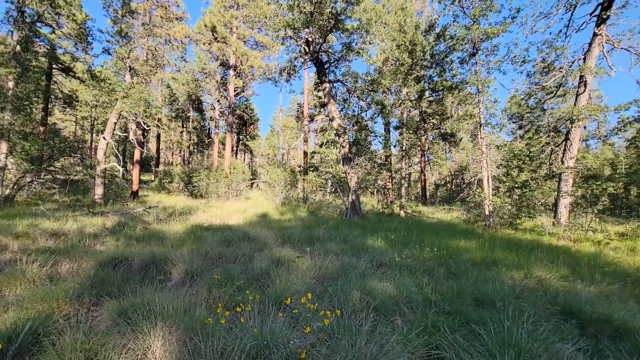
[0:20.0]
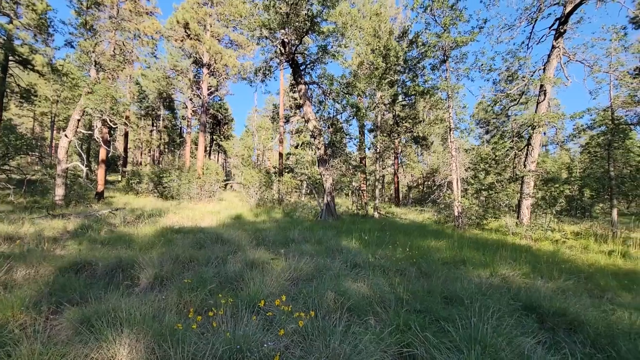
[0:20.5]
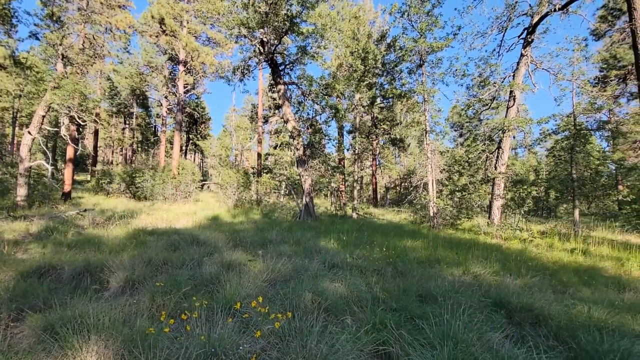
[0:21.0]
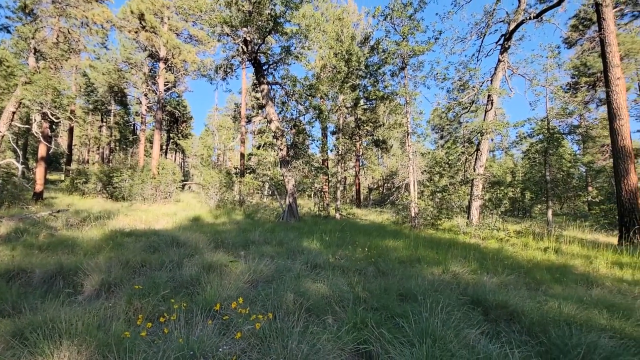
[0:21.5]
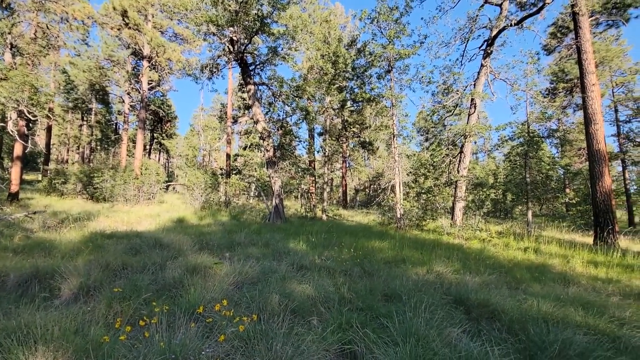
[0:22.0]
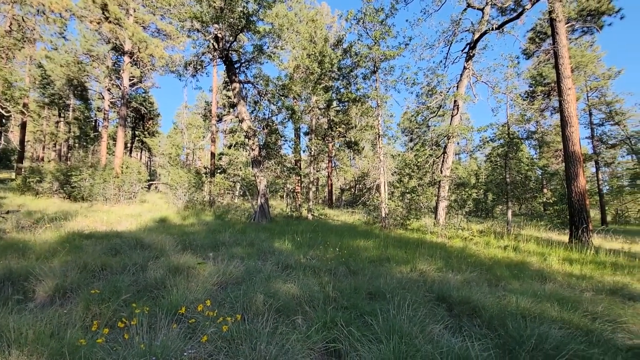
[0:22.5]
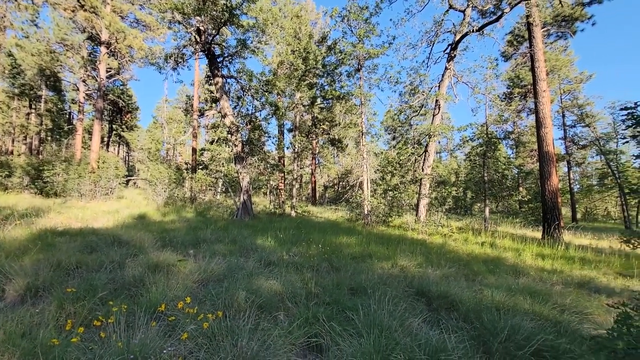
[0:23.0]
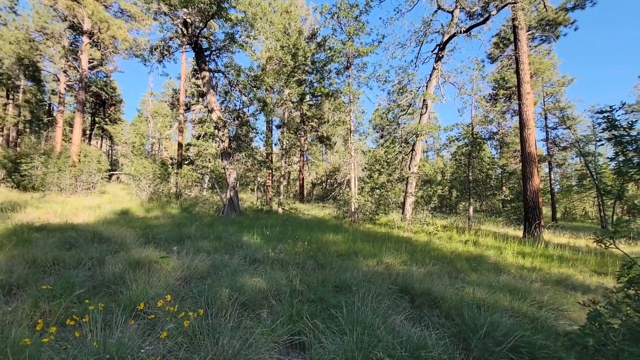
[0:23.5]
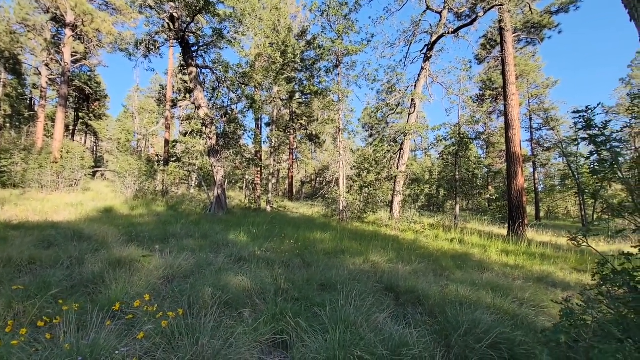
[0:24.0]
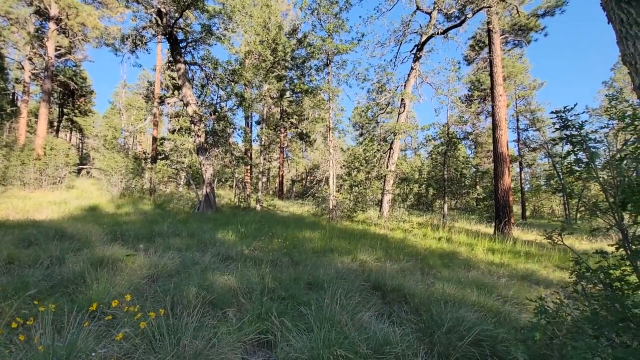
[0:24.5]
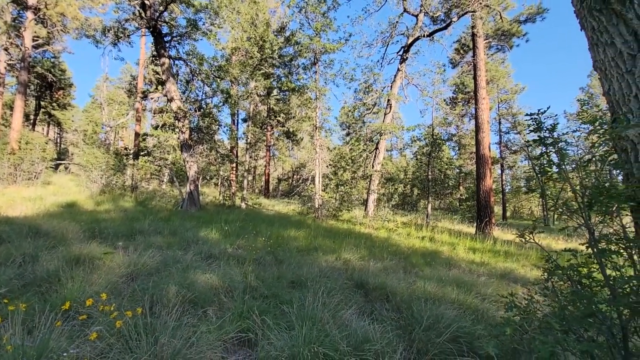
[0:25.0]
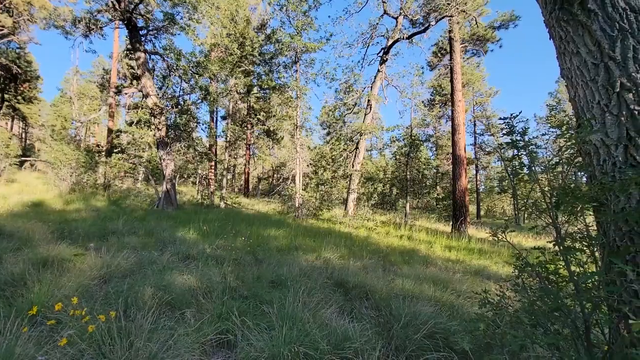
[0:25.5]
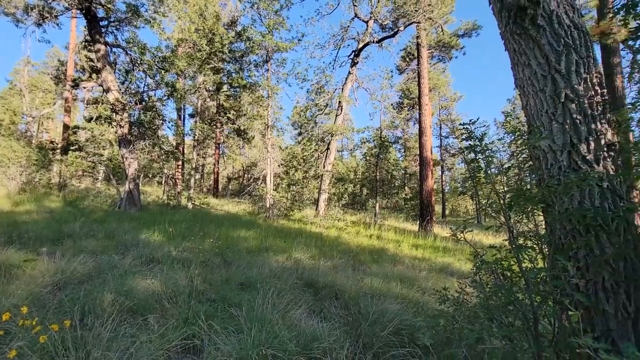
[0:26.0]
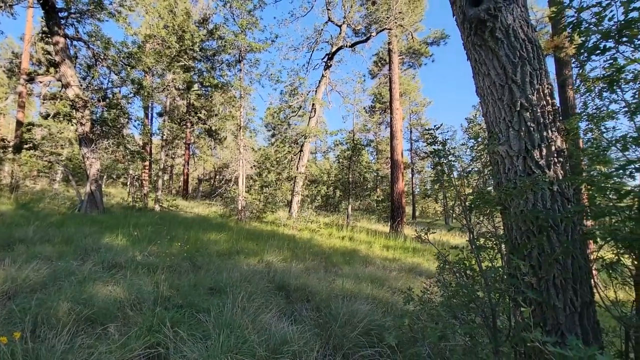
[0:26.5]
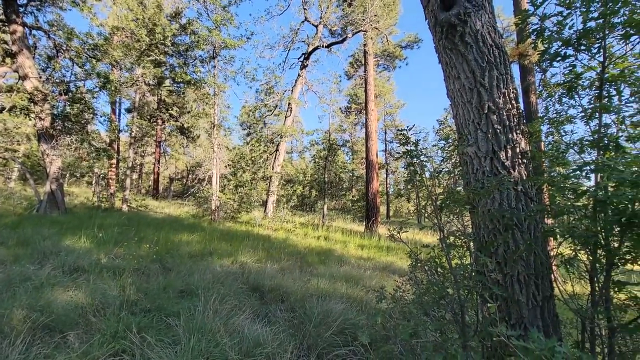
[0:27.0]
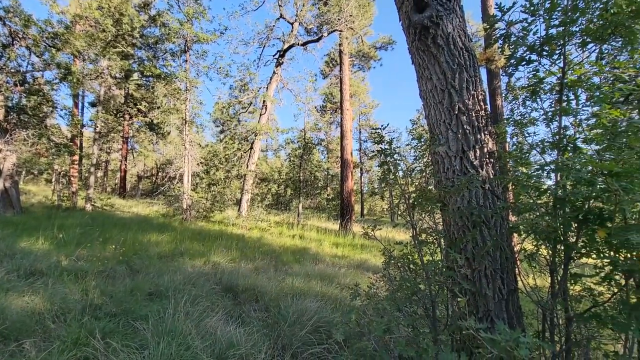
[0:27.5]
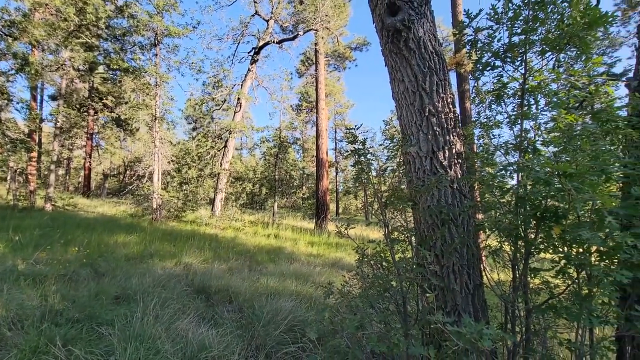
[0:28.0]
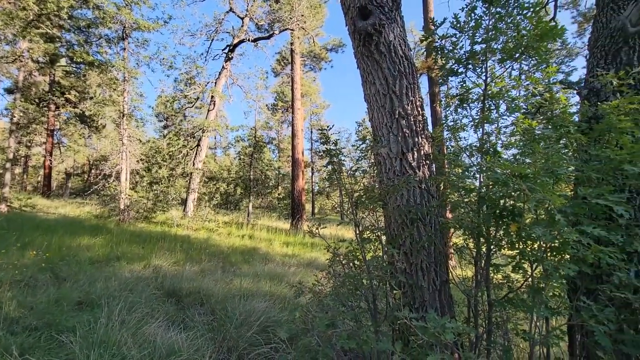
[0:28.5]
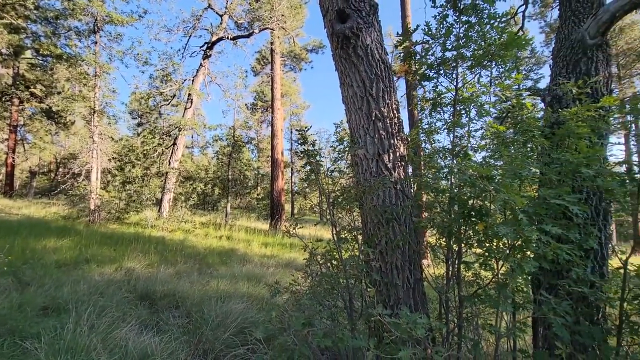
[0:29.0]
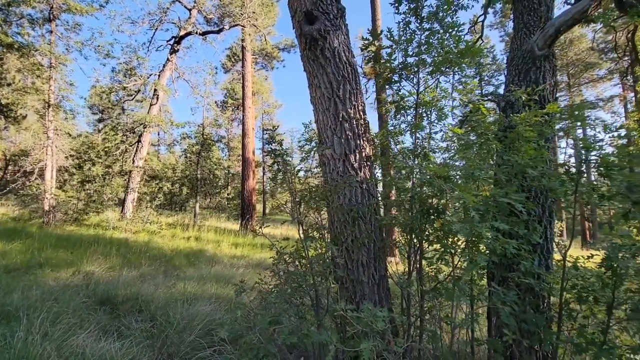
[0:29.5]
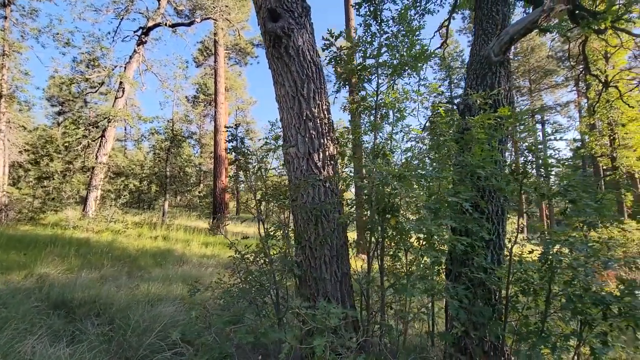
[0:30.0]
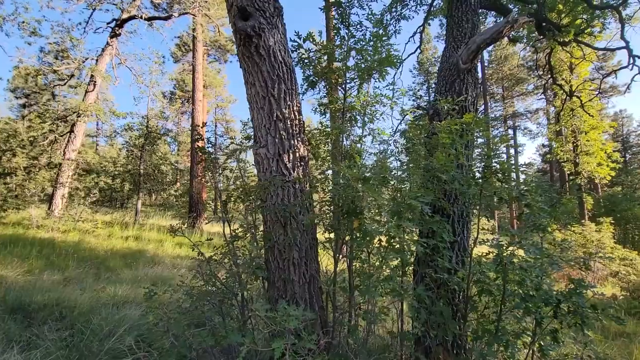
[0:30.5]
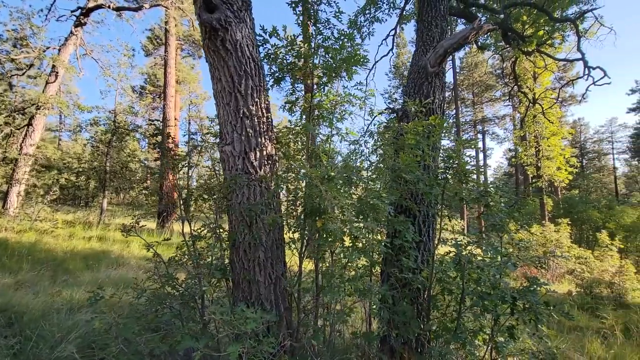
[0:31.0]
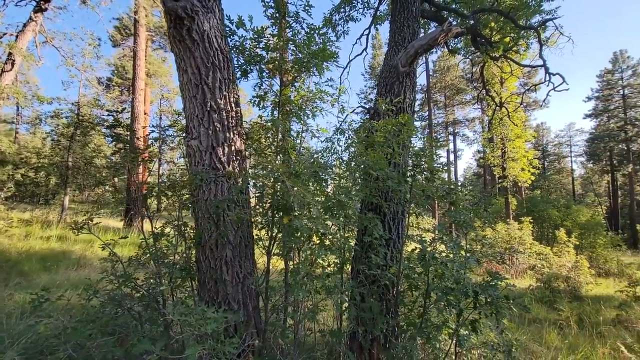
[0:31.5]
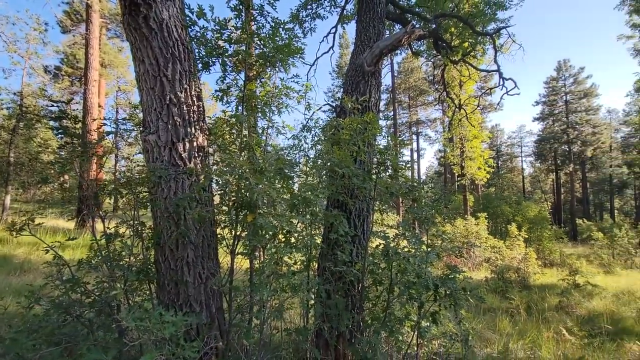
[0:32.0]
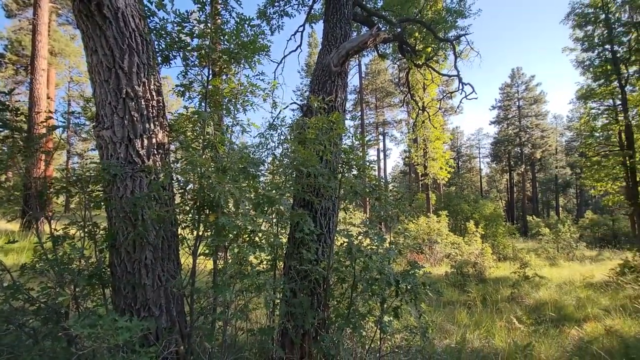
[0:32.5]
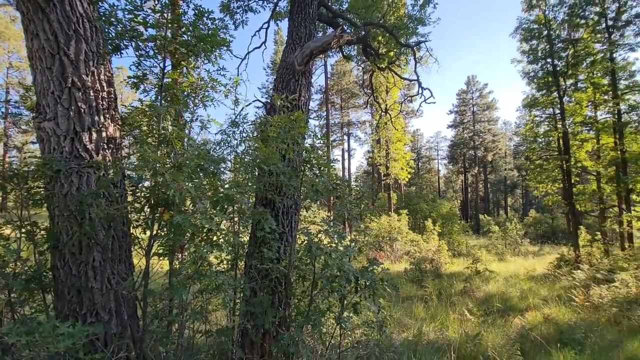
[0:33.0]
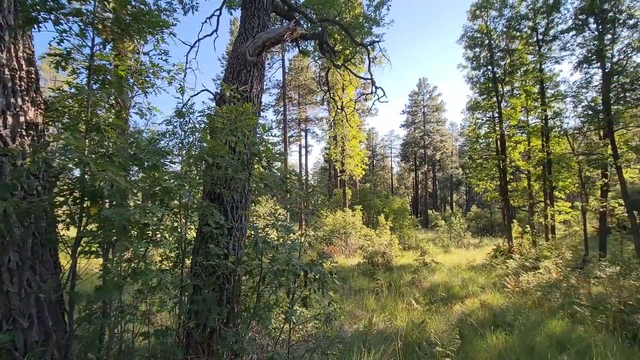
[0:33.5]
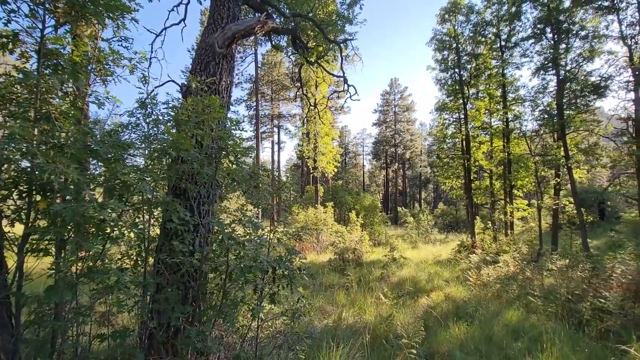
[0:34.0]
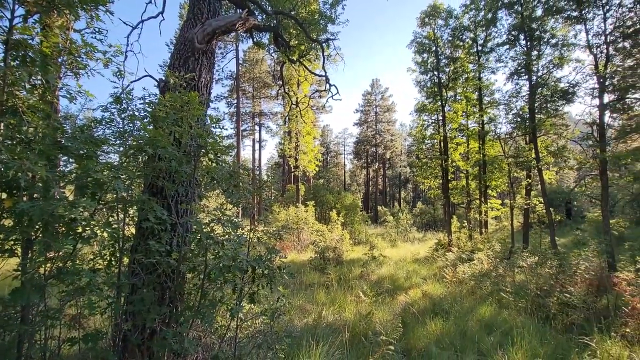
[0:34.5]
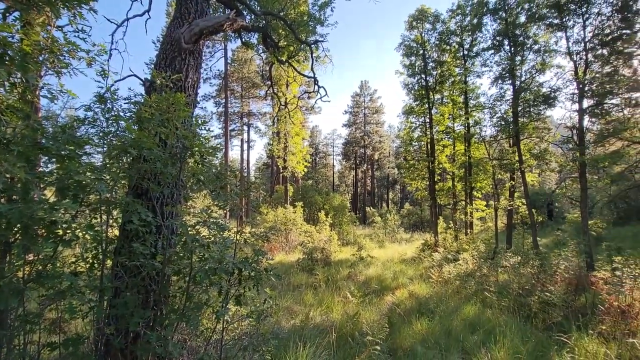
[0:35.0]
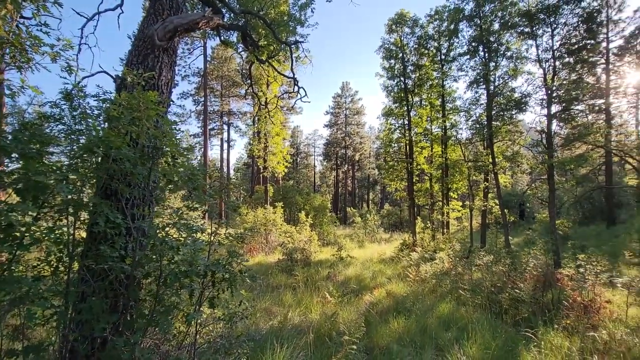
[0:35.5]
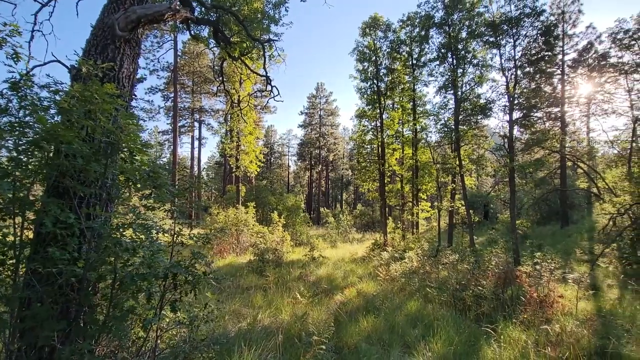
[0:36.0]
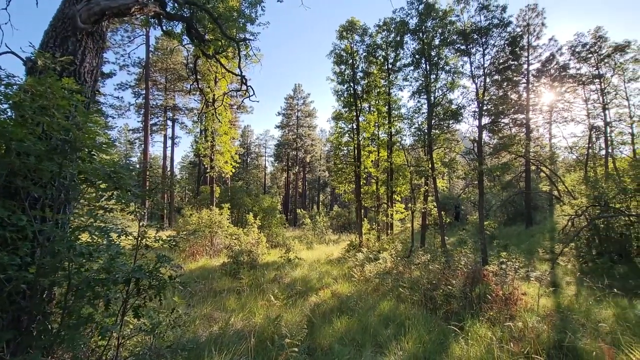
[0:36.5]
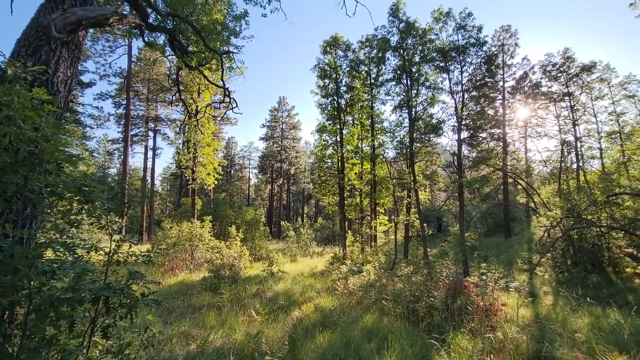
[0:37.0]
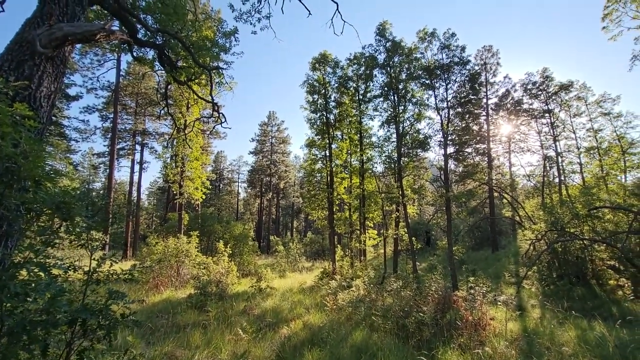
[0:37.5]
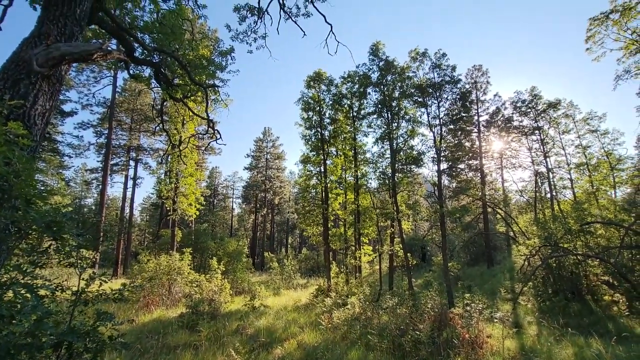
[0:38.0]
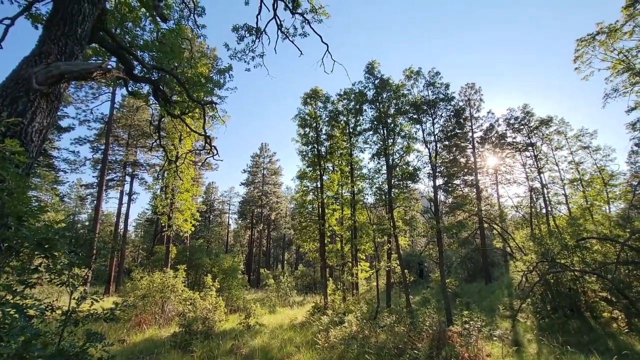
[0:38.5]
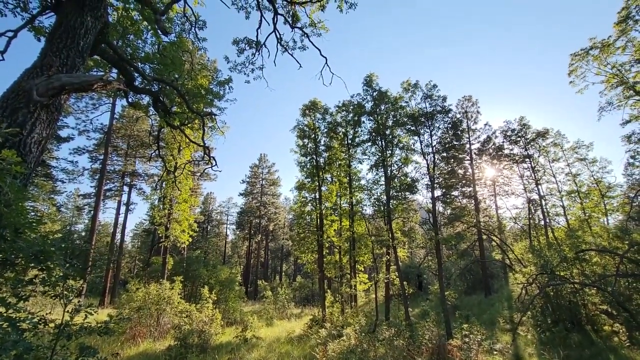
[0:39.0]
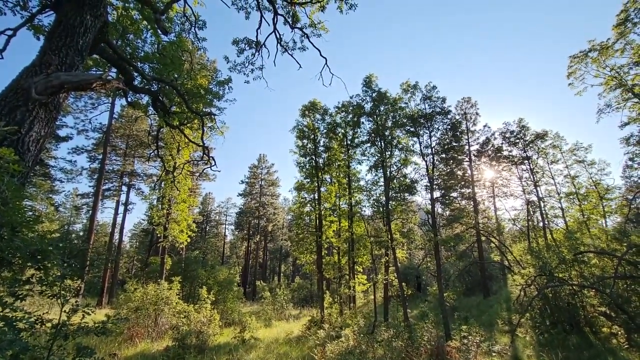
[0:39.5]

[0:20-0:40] The video is filmed from a clearing in a wooded area. The bright blue sky, with no clouds, is visible between the trees. The trees are very tall, with mostly green leaves, and there seem to be all different kinds of trees based on the different appearance of the bark. The grass is green in areas and brown in others, with bright yellow flowers in patches in the grass. As the camera pans slowly and smoothly to the right, various trees of various heights and thicknesses continue to appear. All the way to the right is a row of very tall, skinny trees. There are some bushes and a tree stump where a tree used to be. The camera pans past a tree directly in front of it and continues to another area that appears to have possibly a path next to it. There seems to be another fairly cleared area all the way to the right.